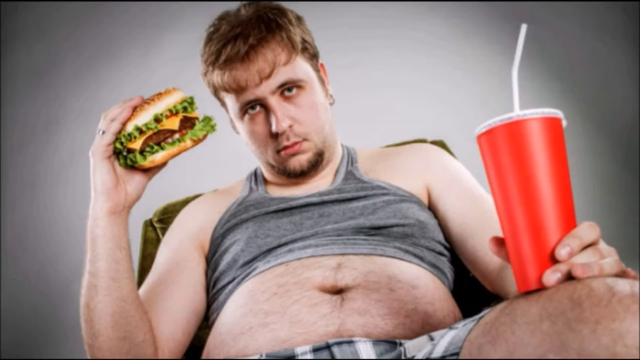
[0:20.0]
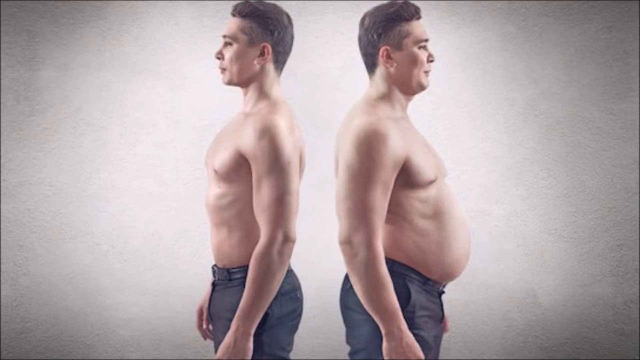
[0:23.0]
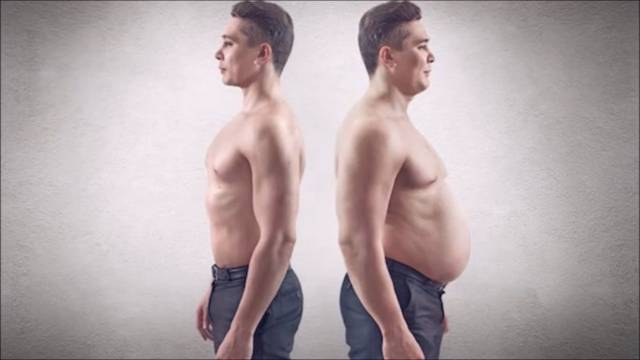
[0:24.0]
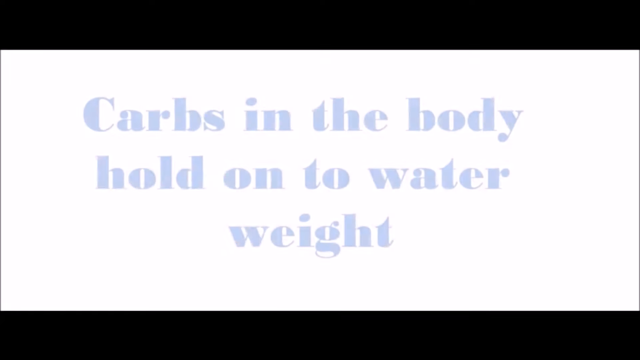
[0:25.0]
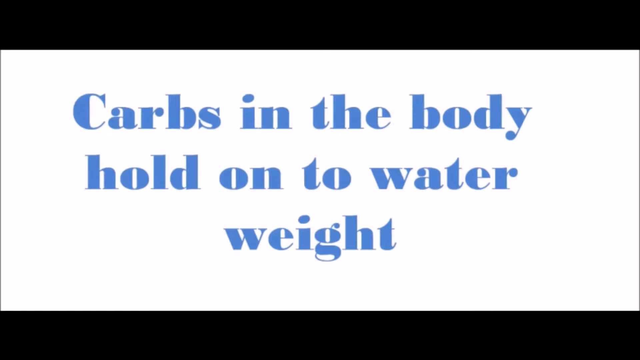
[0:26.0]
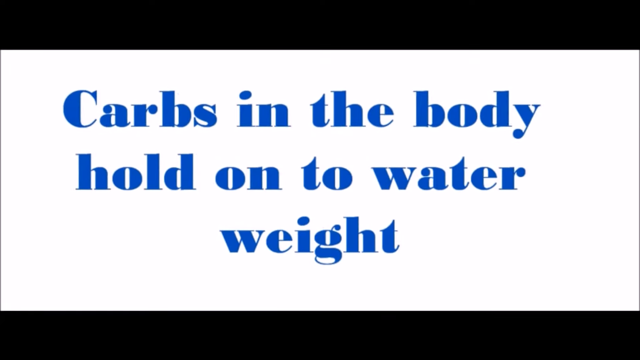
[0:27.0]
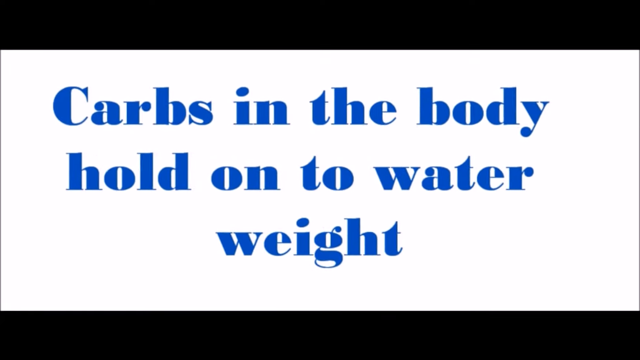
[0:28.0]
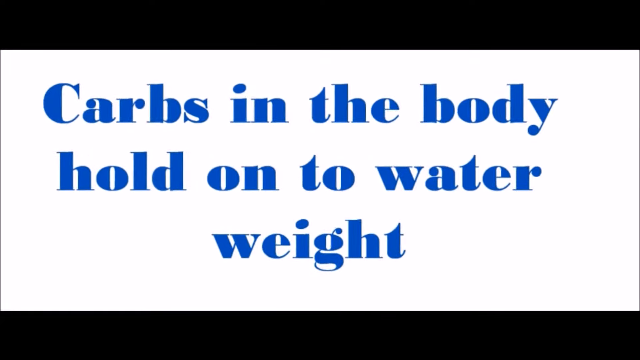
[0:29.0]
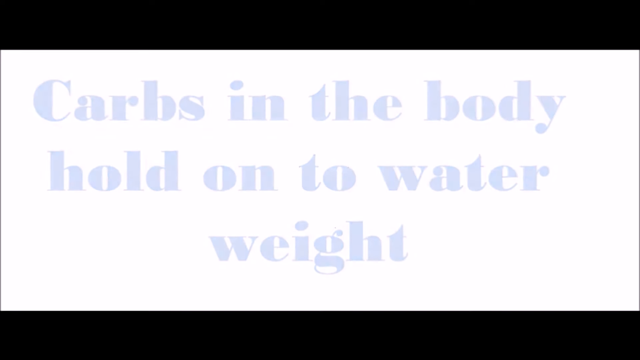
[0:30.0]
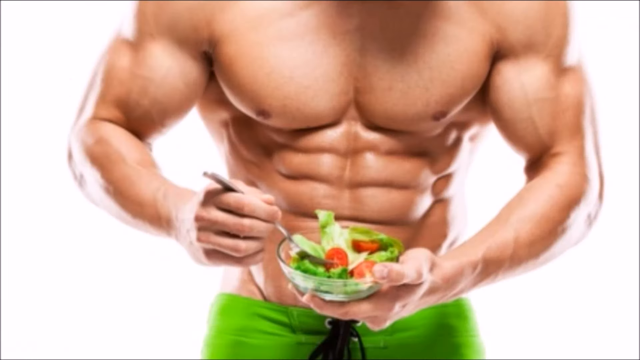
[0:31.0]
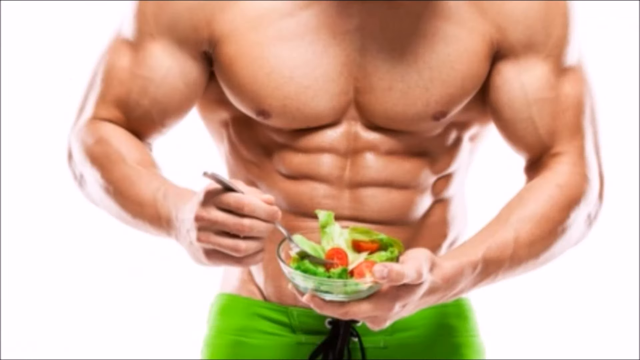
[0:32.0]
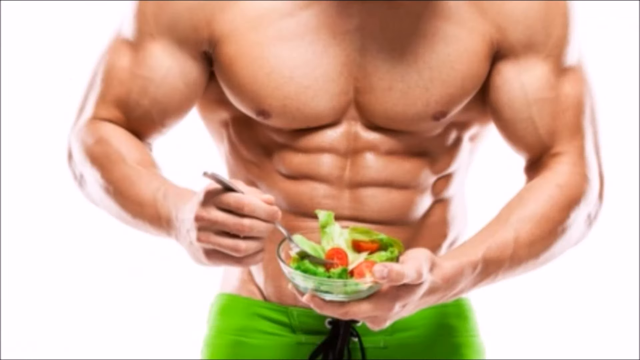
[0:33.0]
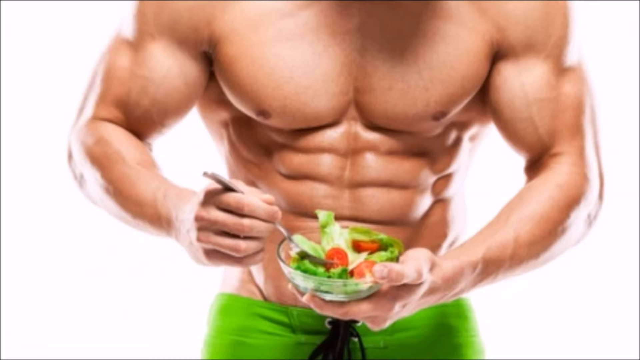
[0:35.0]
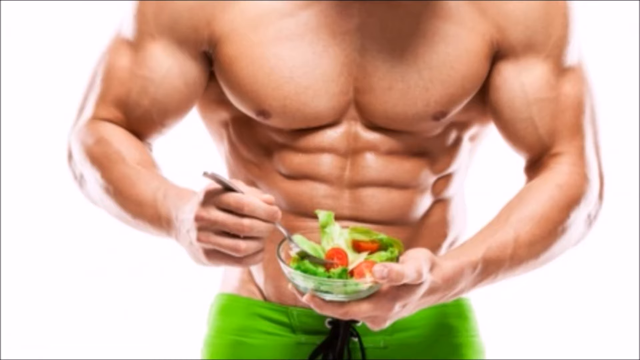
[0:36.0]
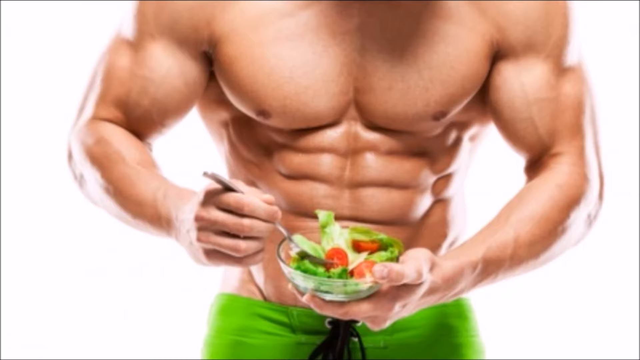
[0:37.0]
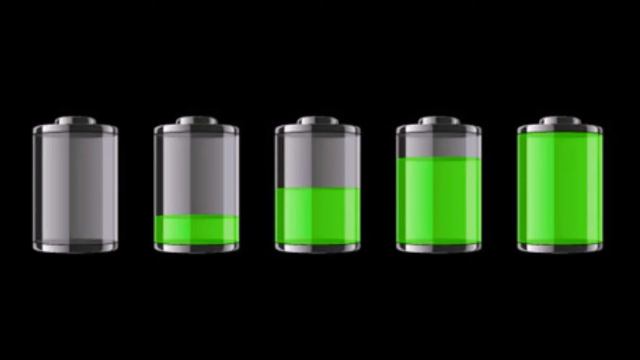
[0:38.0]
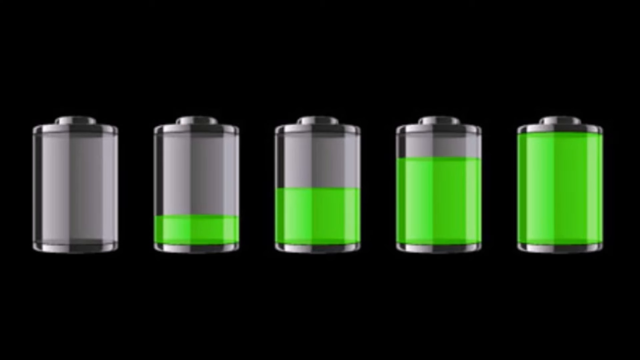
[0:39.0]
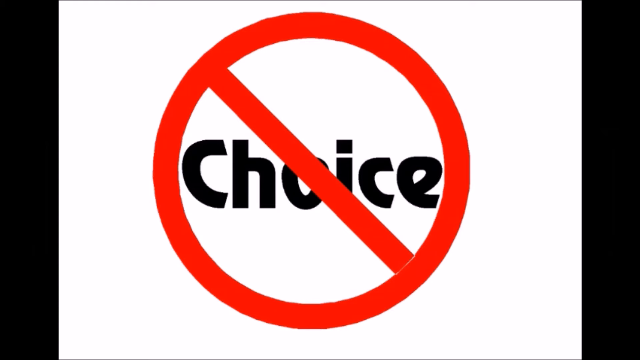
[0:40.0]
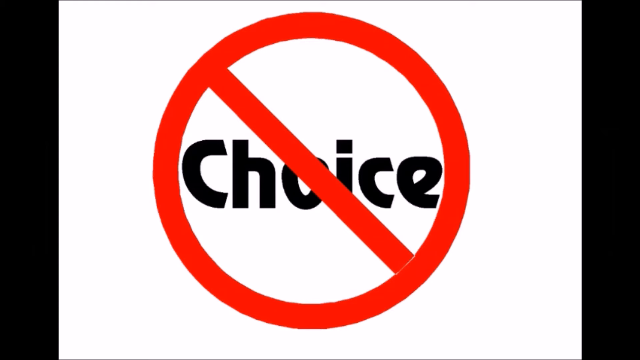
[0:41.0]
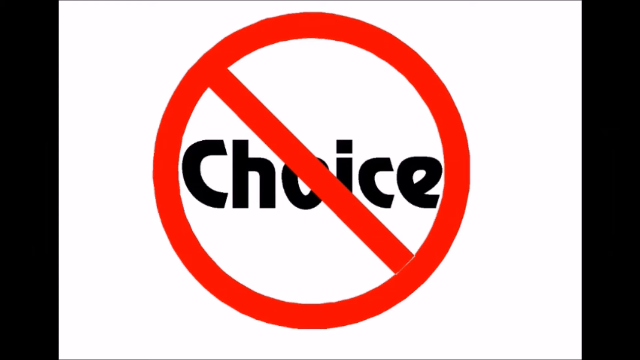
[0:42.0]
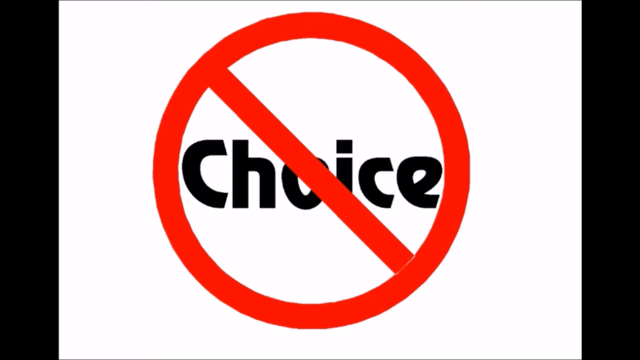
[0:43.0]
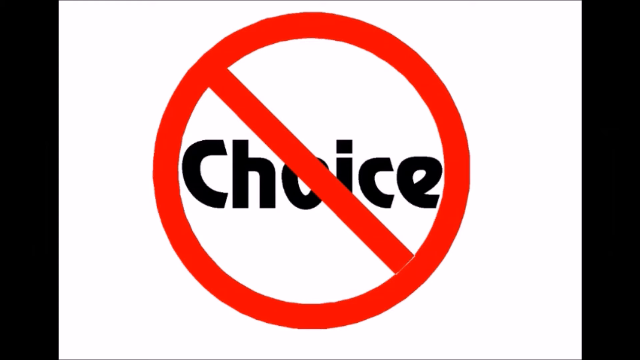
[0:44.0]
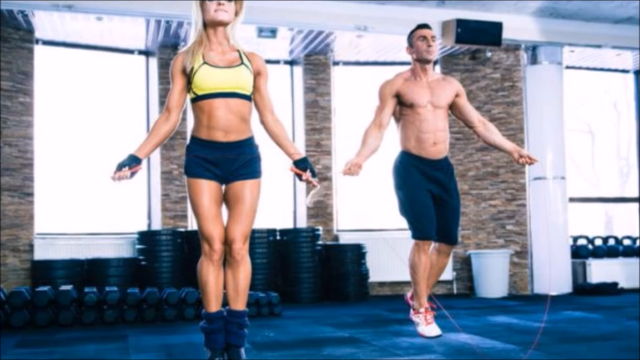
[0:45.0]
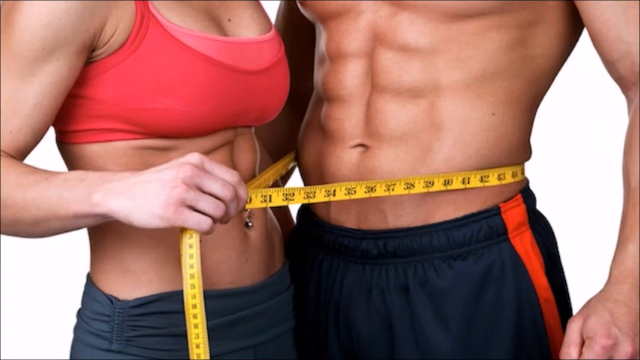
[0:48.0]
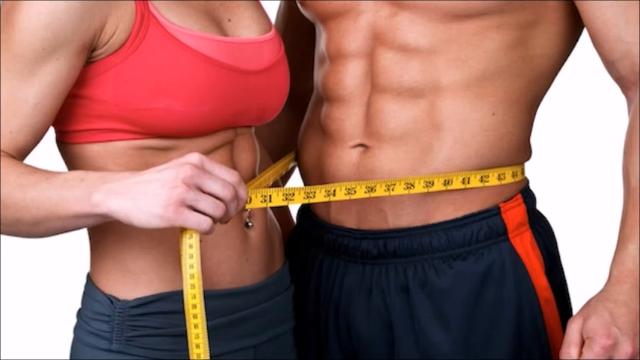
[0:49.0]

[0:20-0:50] A guy sits in a chair against a gray background. He has dark circles under his eyes and looks unhappy. He wears what looks like a wife beater pulled up to his chest, and a little bit of his belly hangs out. In one hand he holds a fast food restaurant soda and in the other a cheeseburger with two patties, a bun, cheese and lettuce visible. He looks at the camera, kind of miserable. Next, what looks like the same person, a male probably in his 20s, appears back-to-back with himself wearing the same pants: one version is very fit and in shape, while the reverse image is overweight, with a belly, a bit more of a double chin and a little more fat on his arms. A white screen then reads "carbs in the body hold on to water weight." Then a really fit guy with six-pack abs is shown eating a salad.